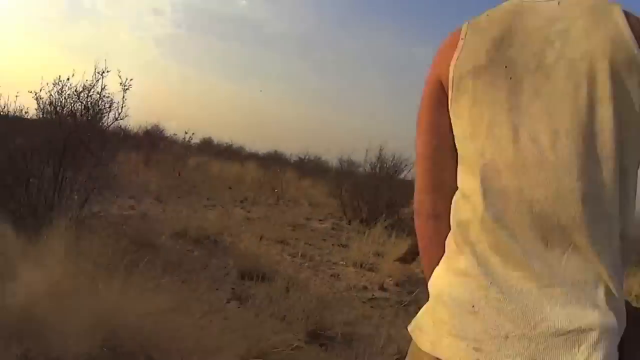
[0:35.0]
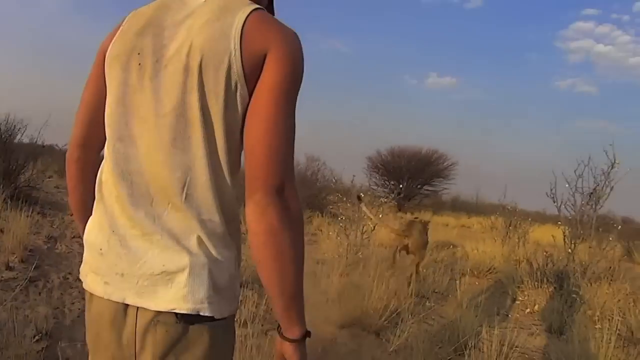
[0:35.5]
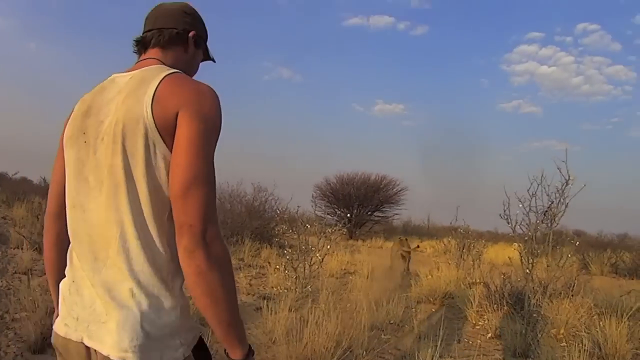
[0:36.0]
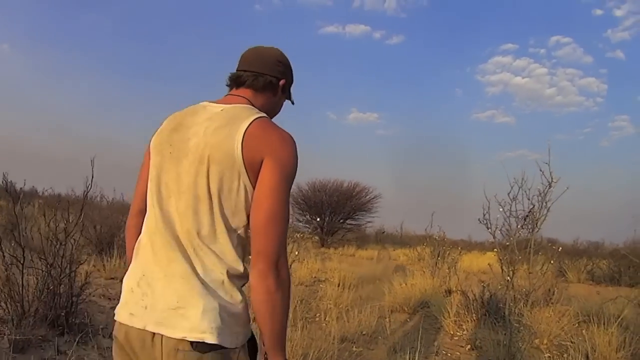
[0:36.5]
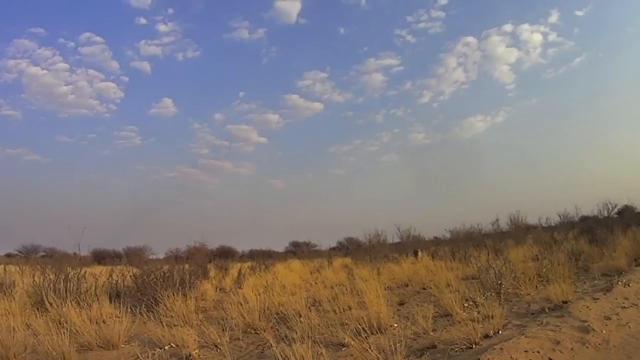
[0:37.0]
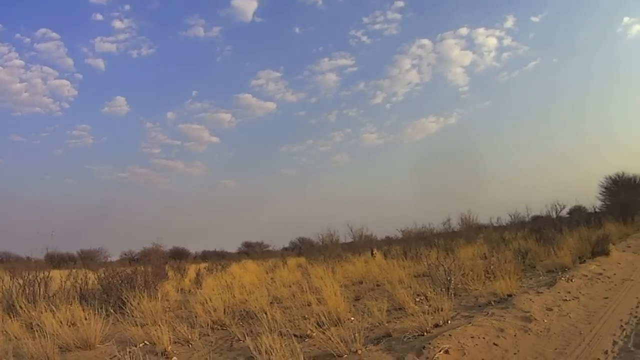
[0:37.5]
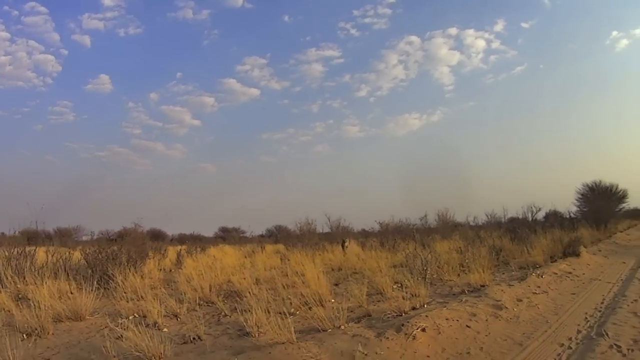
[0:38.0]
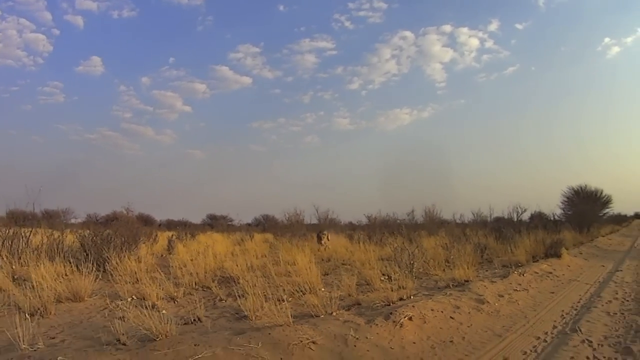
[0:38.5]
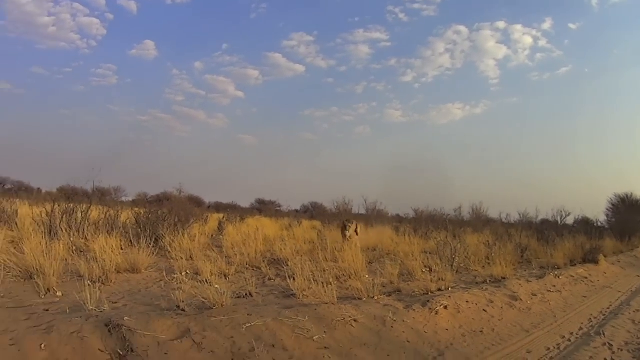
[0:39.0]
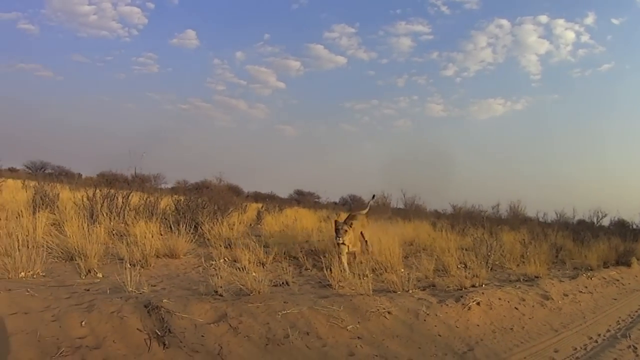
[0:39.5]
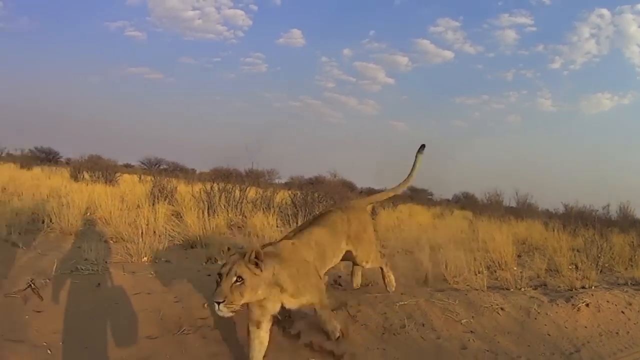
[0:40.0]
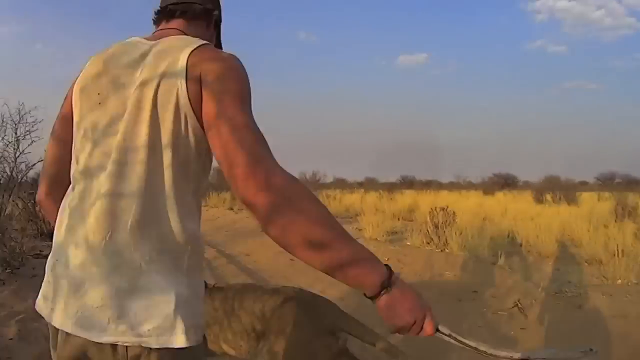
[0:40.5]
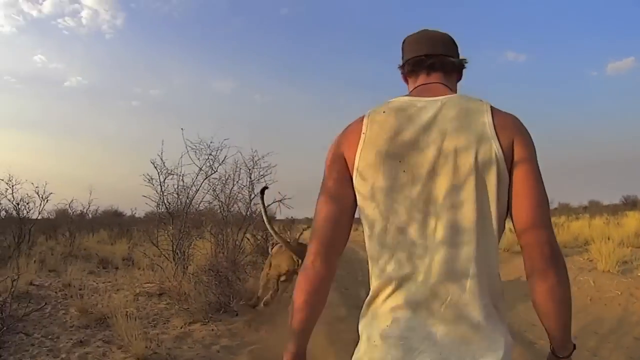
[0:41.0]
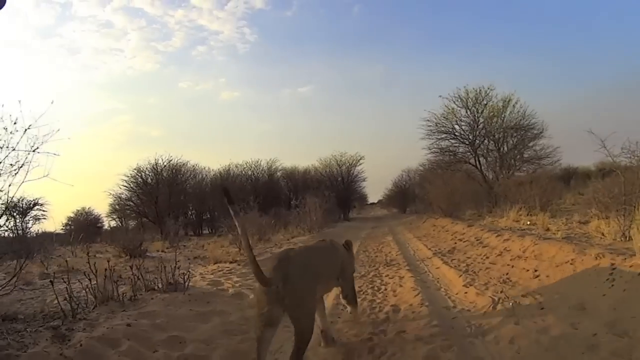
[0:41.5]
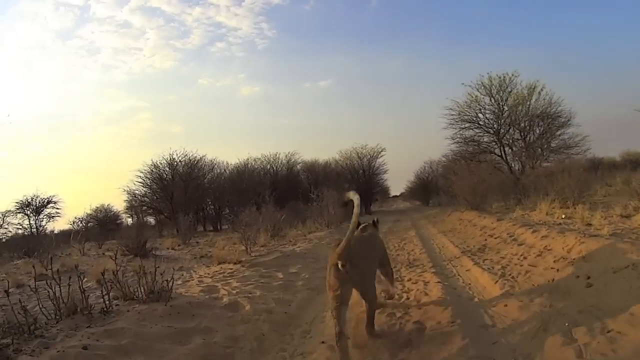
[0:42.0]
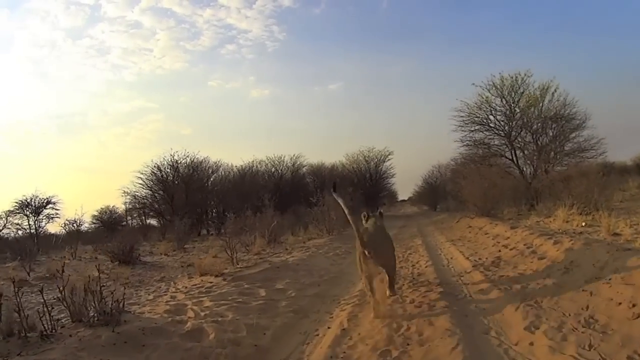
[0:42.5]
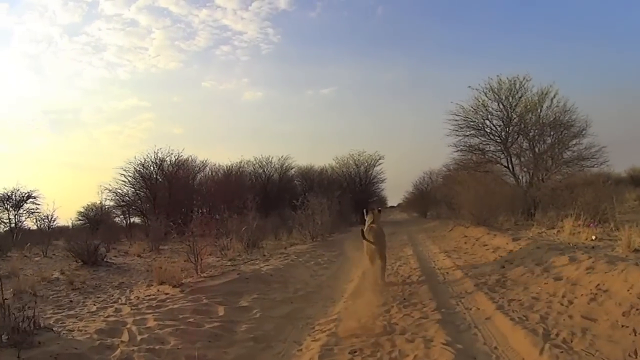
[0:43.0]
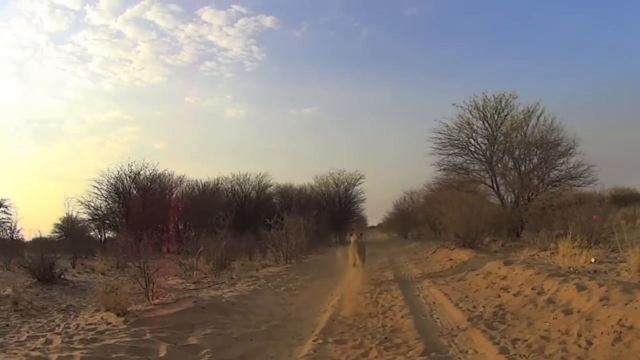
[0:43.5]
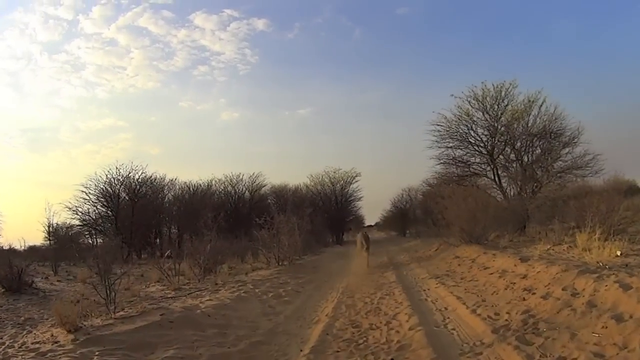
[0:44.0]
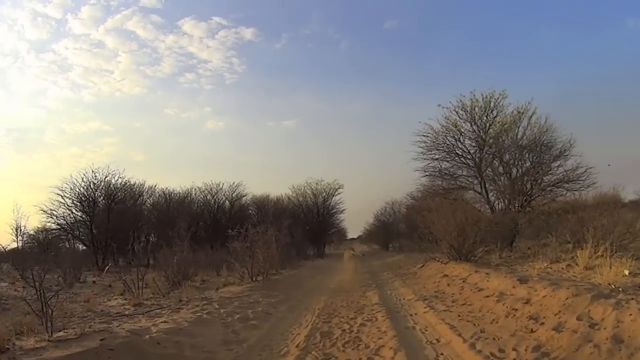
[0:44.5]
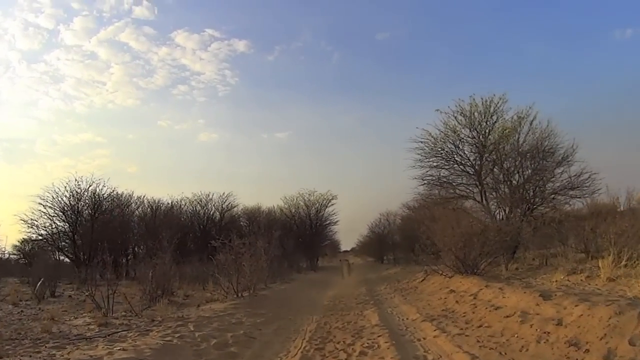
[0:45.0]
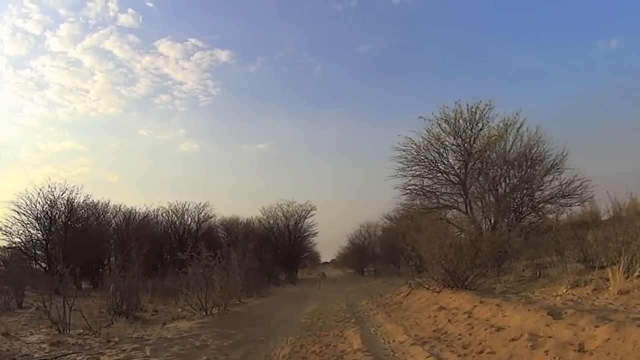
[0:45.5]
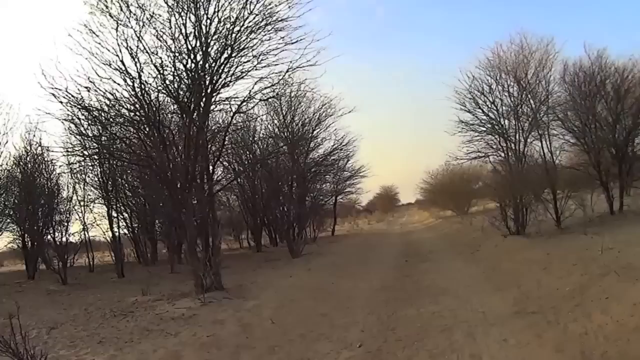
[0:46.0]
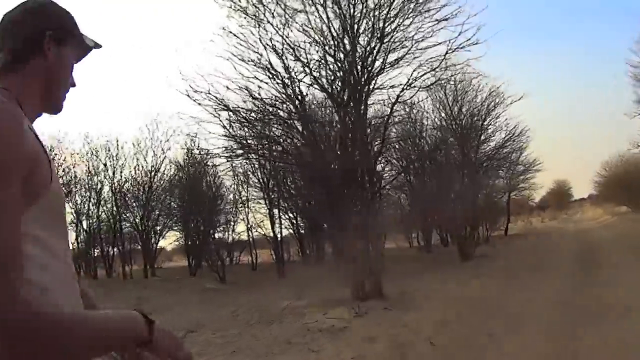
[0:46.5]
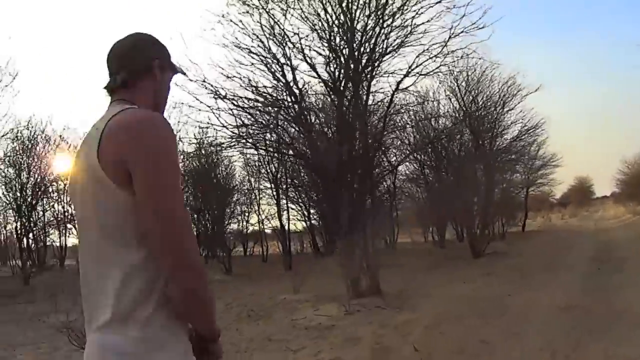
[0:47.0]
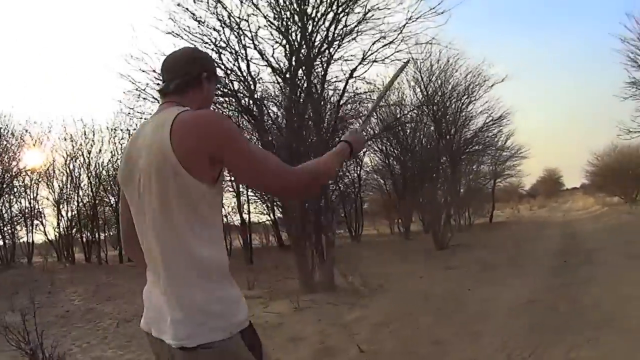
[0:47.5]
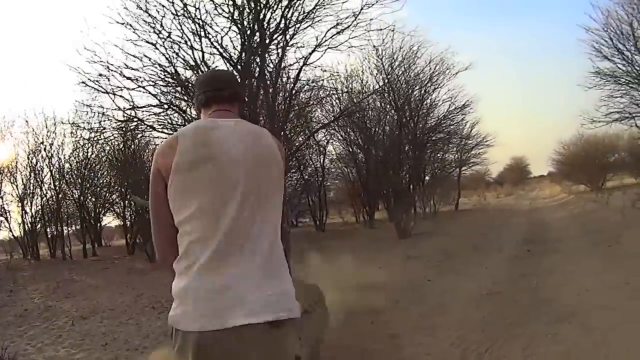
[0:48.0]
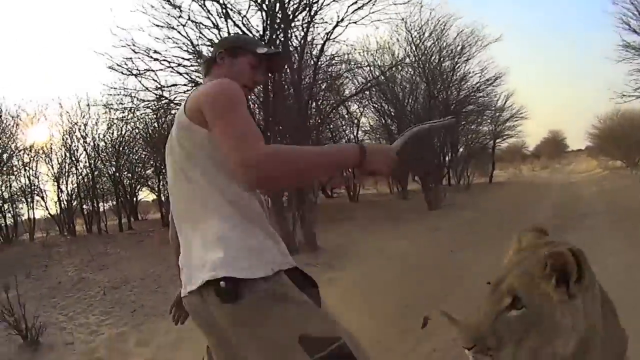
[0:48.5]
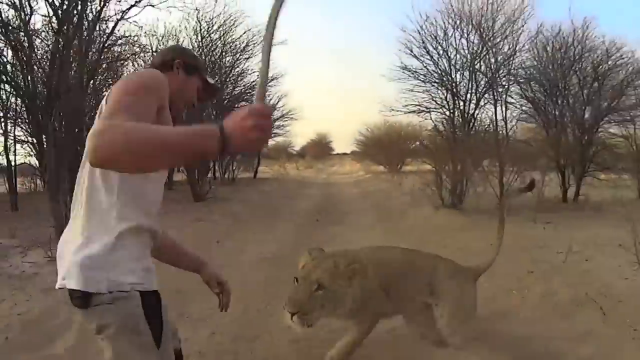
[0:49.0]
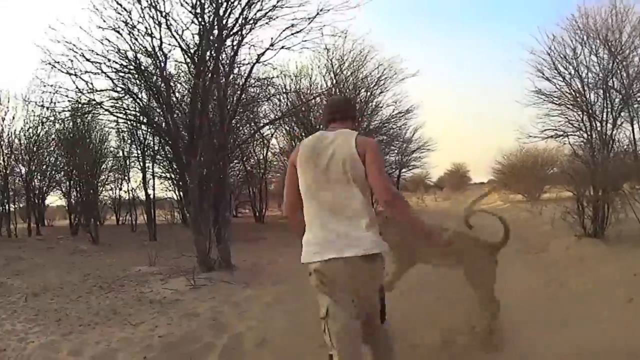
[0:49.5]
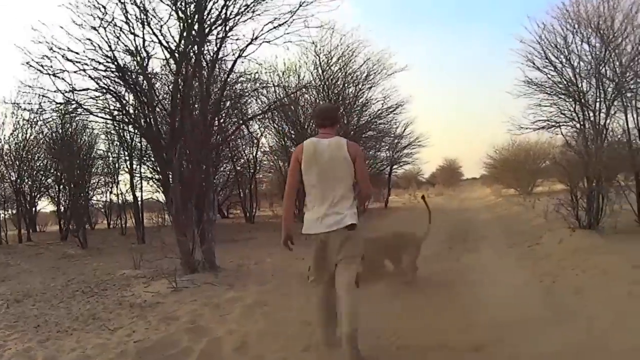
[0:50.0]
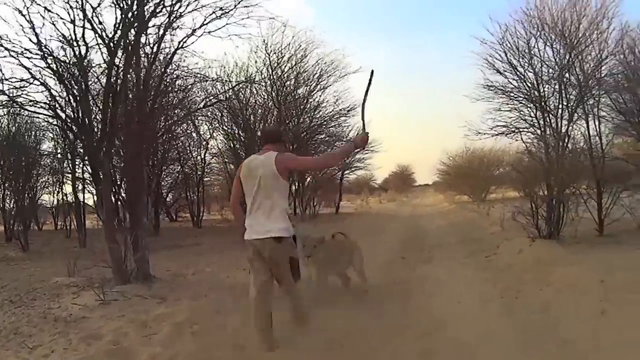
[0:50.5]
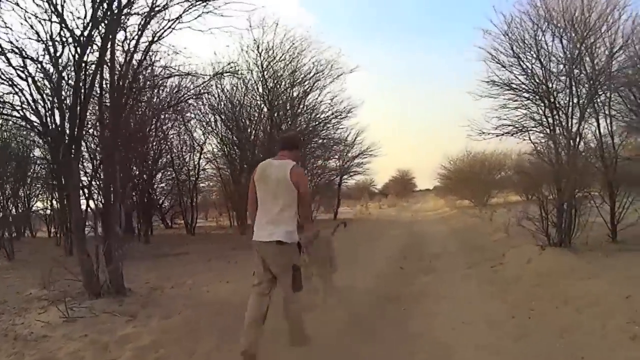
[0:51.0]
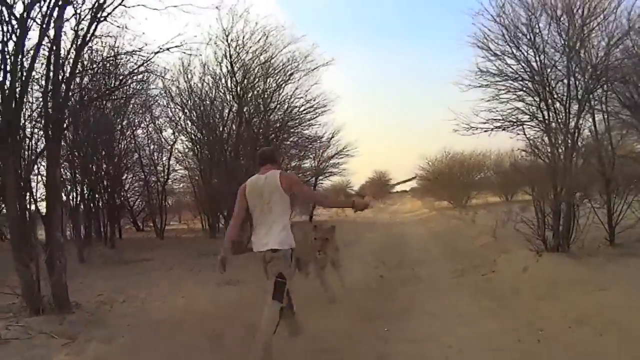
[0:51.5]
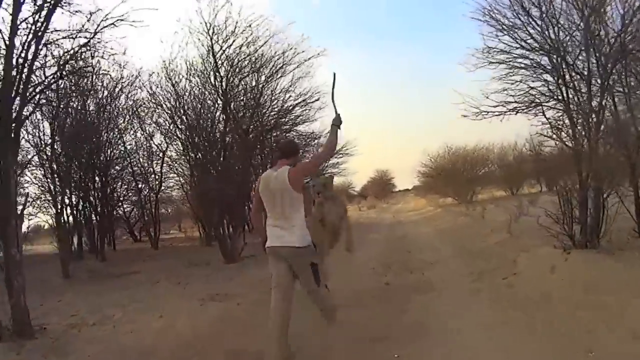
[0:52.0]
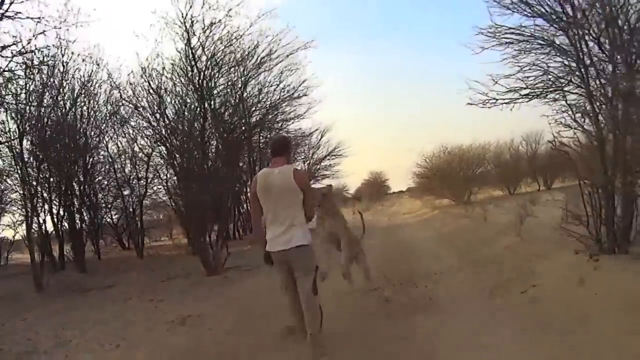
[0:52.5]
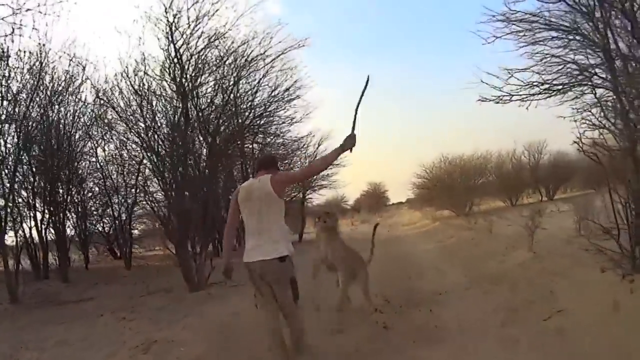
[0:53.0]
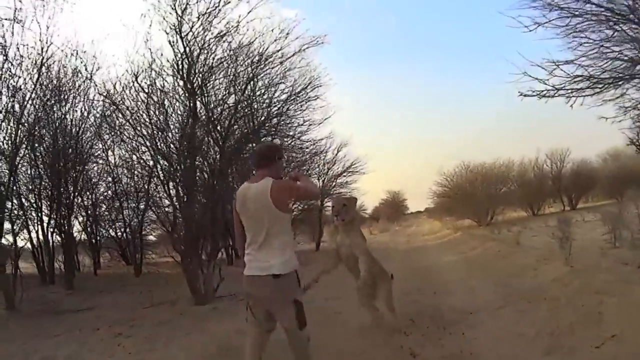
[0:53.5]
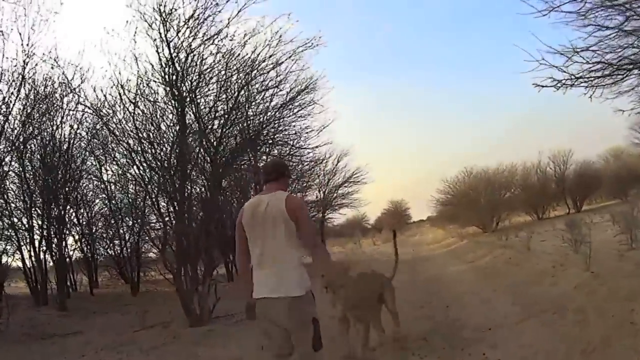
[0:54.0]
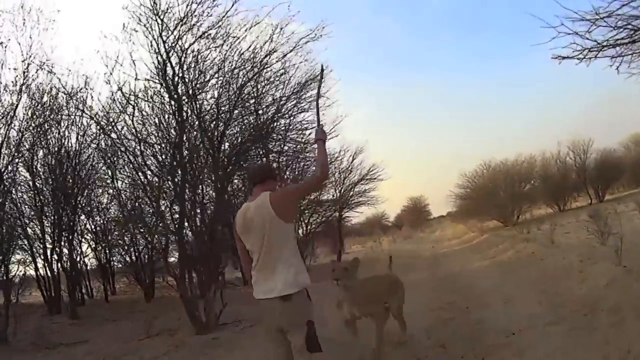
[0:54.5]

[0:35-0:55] The man and the lion walk down a sandy road. The man, who also wears a baseball cap, holds a small wooden stick and thrusts it around with the lion, a bit like playing fetch with a dog, but he never throws it; he keeps it in his hand while the lion comes and plays with him as they keep walking forward. It is still a sunny day, and there are no cars or other people in the area; it is just the two of them.